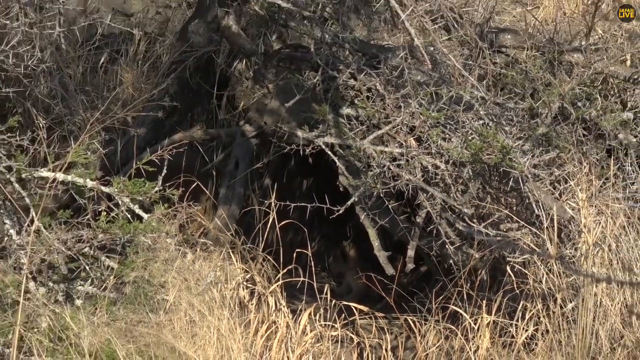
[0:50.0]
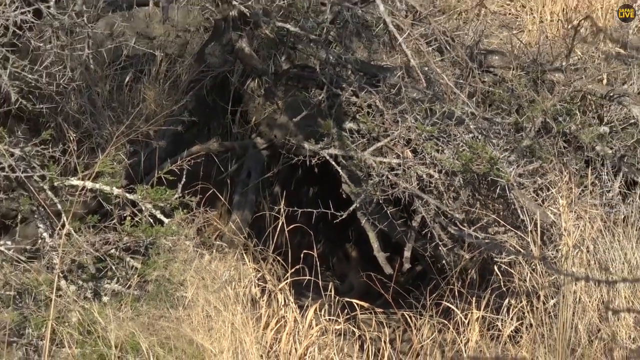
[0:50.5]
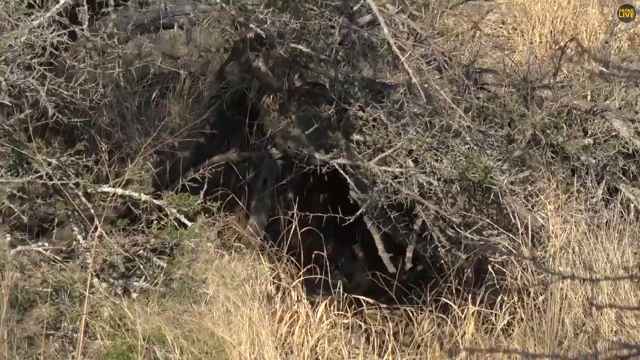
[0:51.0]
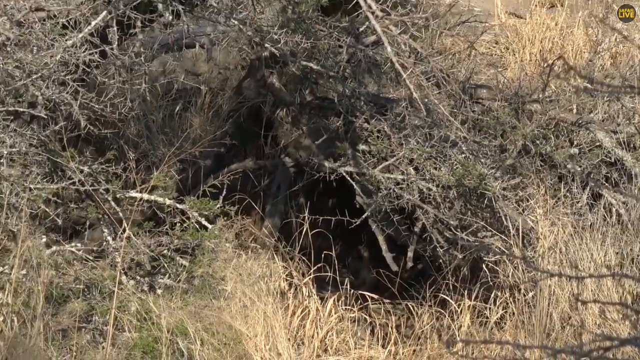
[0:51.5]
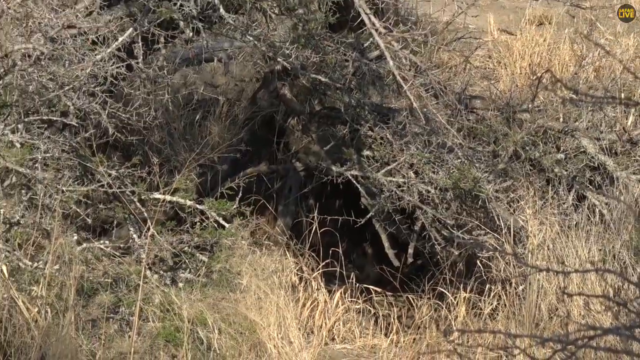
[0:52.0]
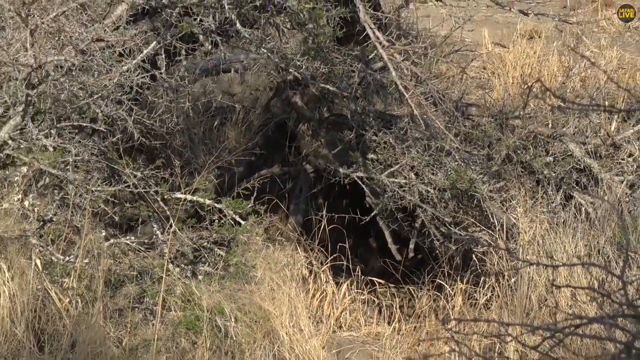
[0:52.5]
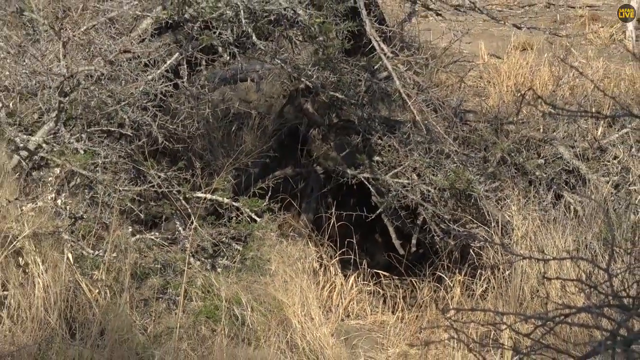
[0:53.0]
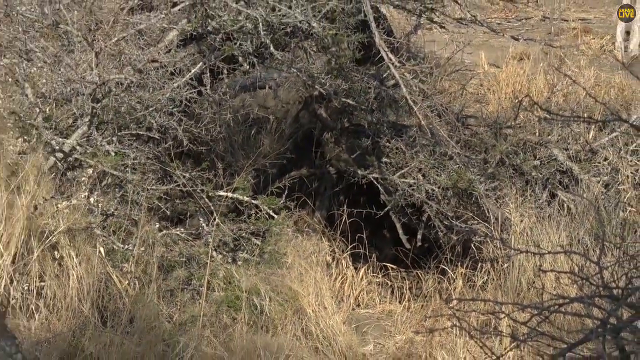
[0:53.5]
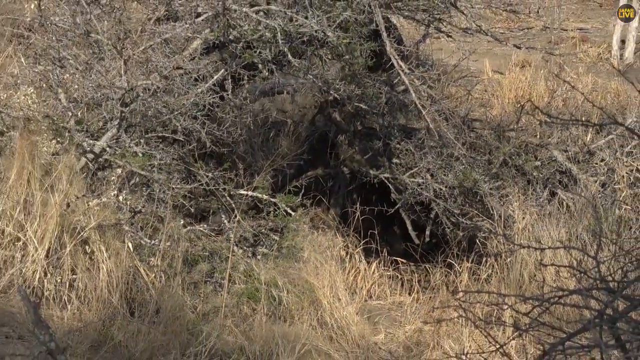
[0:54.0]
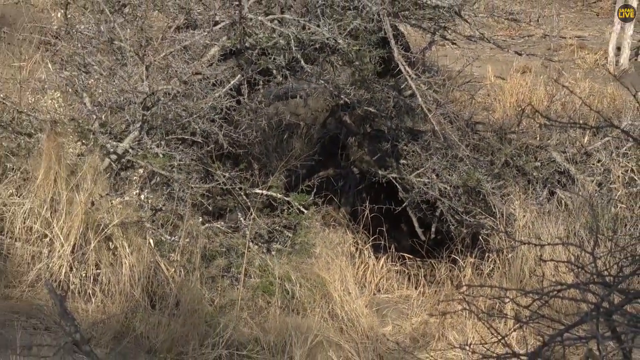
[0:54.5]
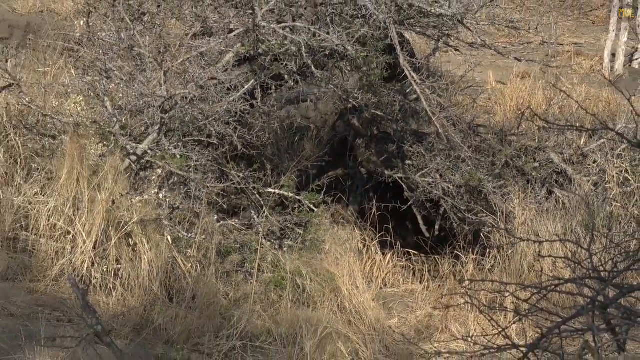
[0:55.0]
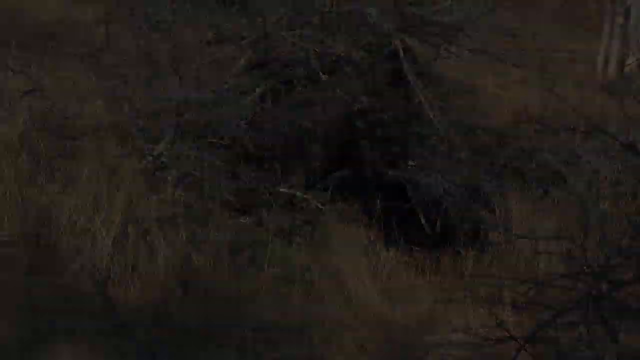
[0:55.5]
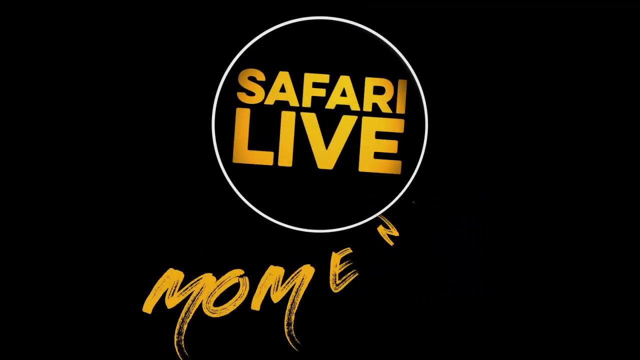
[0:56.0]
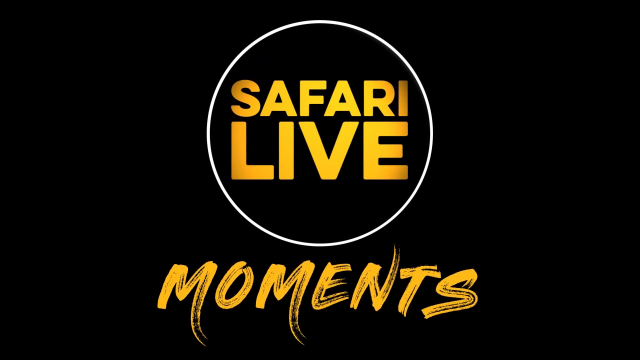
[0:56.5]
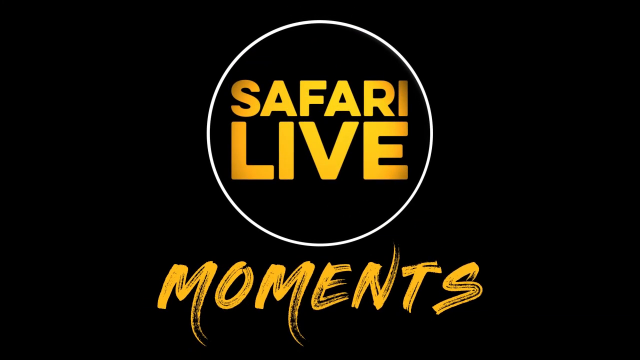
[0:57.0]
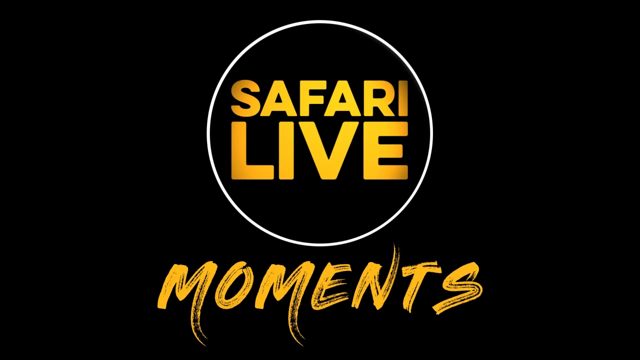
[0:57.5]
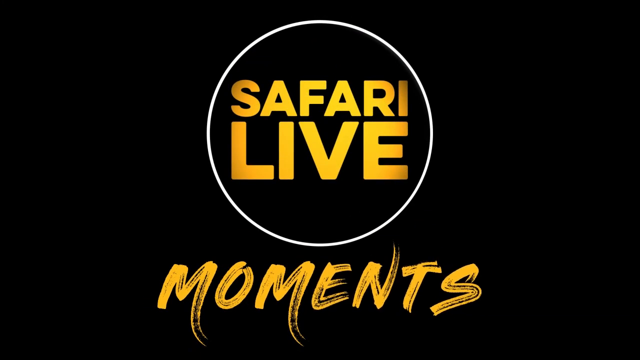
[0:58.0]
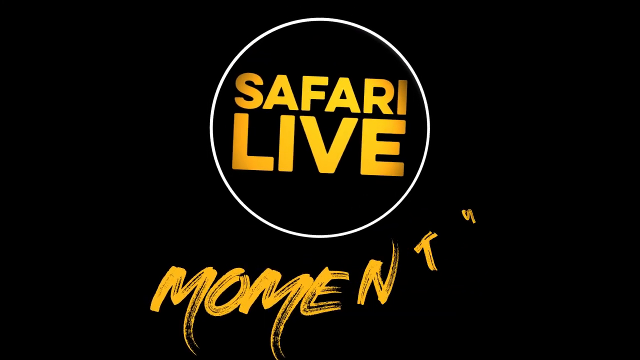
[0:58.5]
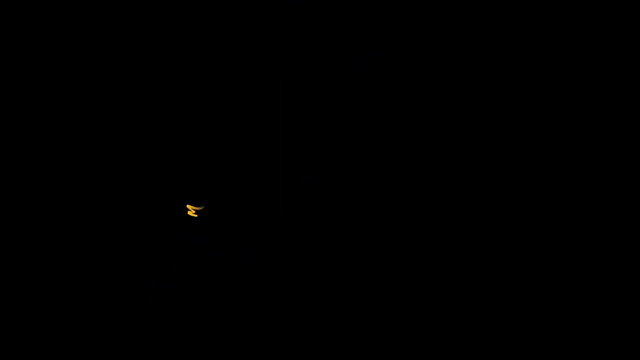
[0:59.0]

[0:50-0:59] The zoom out continues, revealing the whole area where the cheetah cubs are hiding. The hiding spot is heavily covered by a very large amount of branches of at least two different types: some thicker, and others thinner and smaller with thorns. Tall grass covers the very entrance of the hideout, where the two cheetah cubs are hiding. The screen then transitions to black, showing a white circle outline with golden text in the middle that reads "Safari Life Moments".